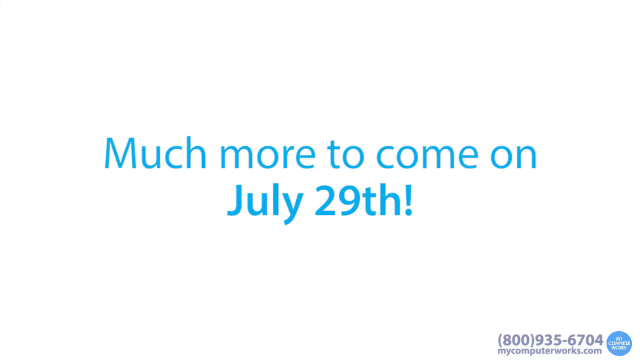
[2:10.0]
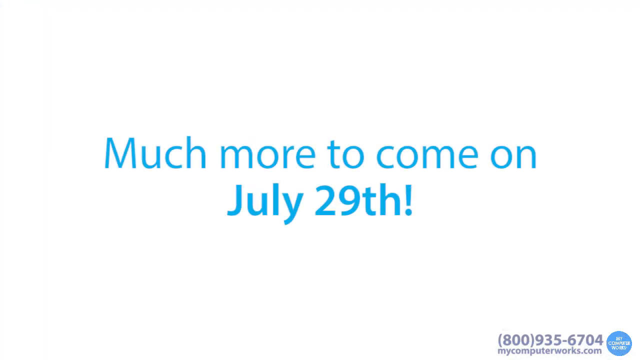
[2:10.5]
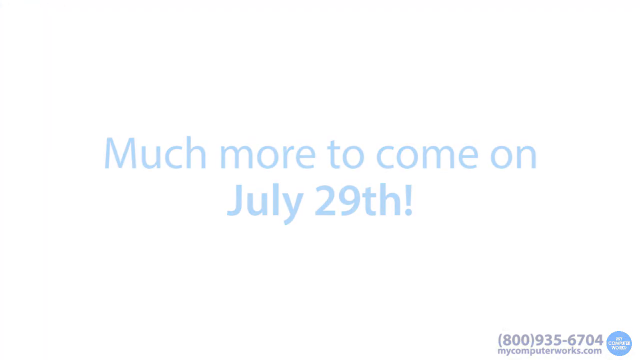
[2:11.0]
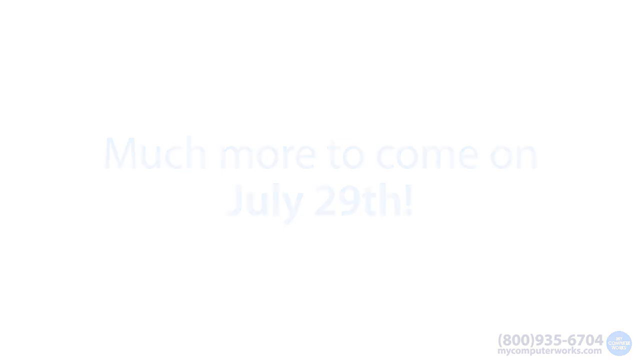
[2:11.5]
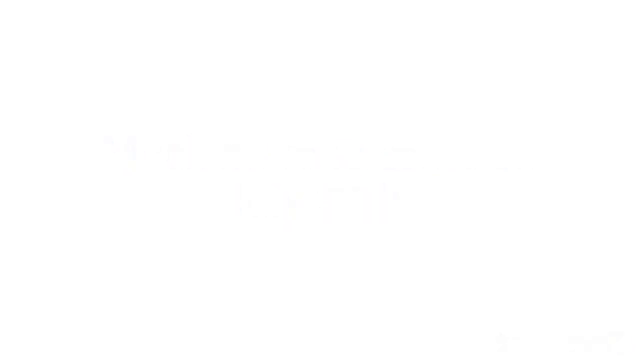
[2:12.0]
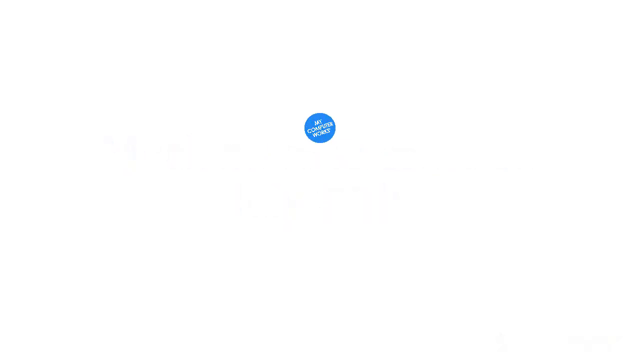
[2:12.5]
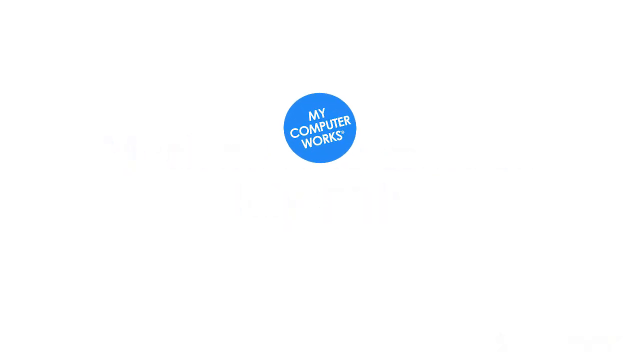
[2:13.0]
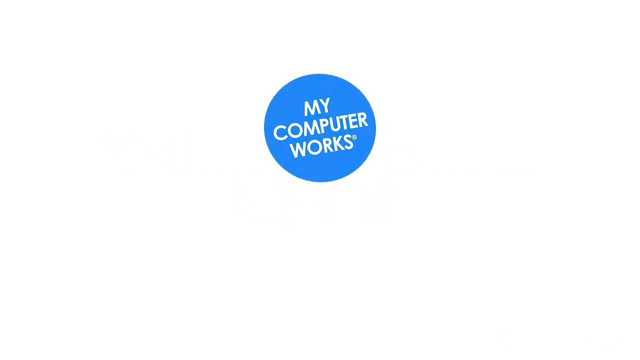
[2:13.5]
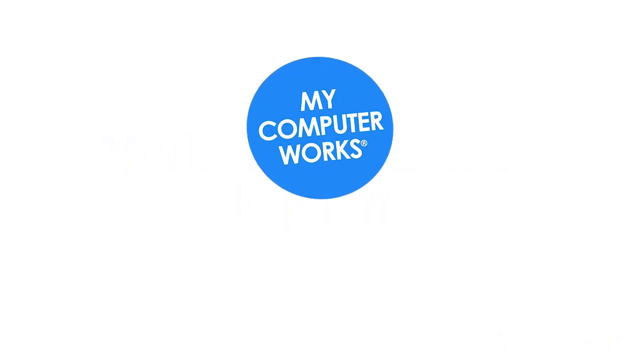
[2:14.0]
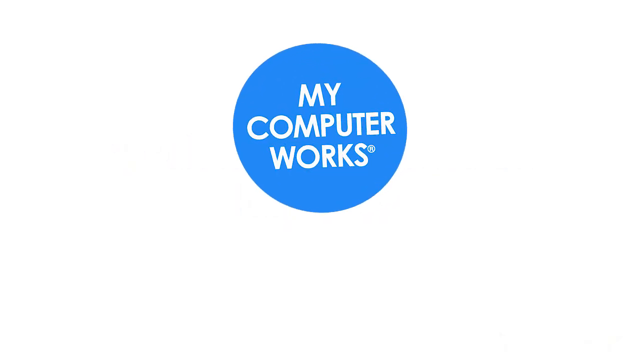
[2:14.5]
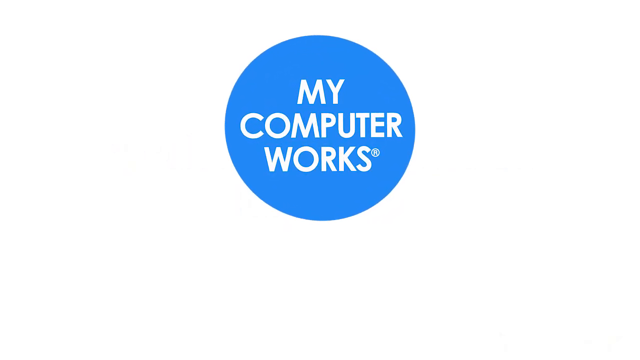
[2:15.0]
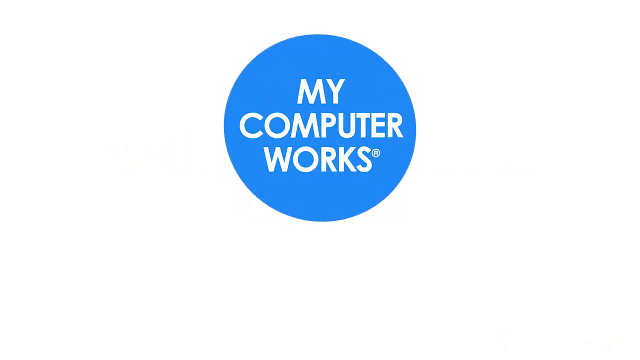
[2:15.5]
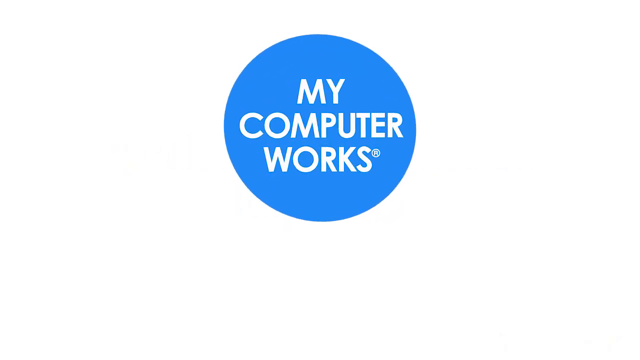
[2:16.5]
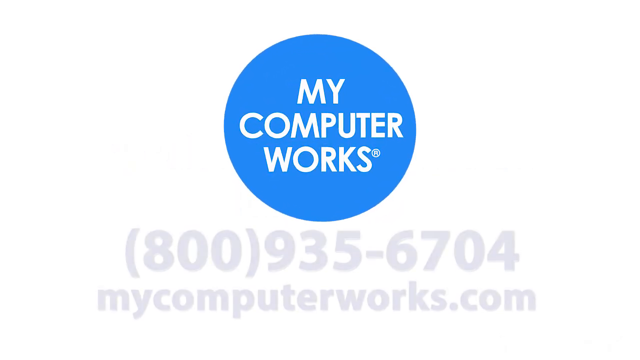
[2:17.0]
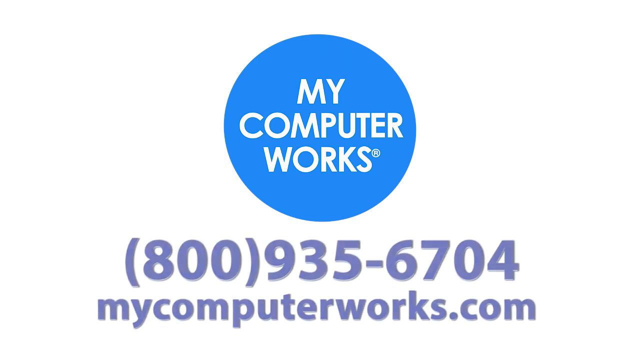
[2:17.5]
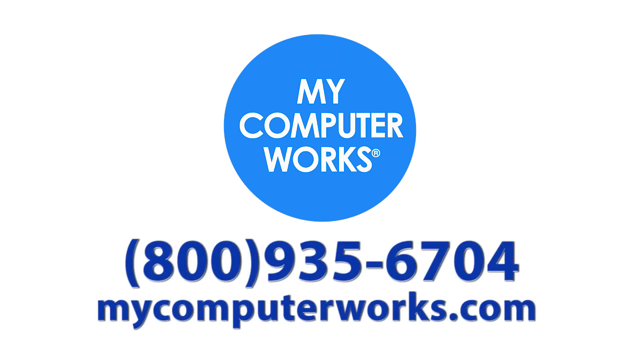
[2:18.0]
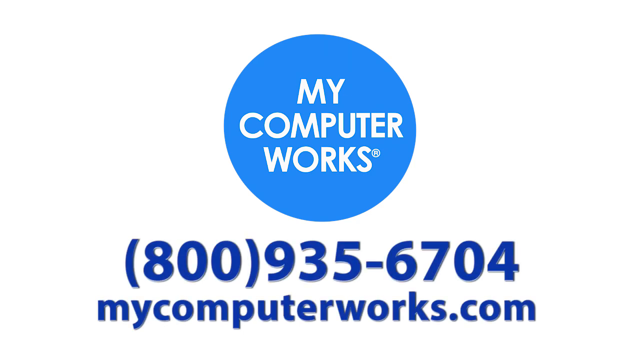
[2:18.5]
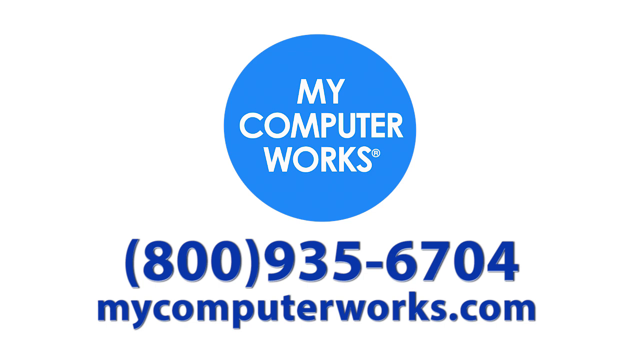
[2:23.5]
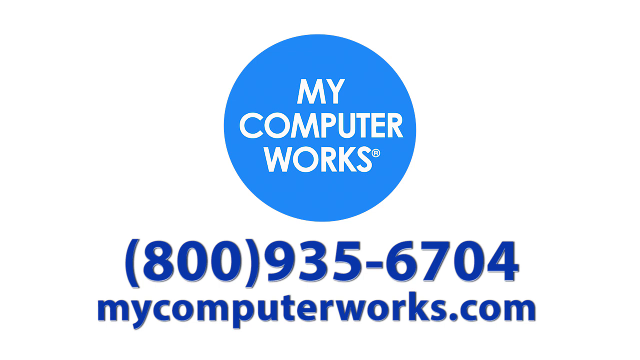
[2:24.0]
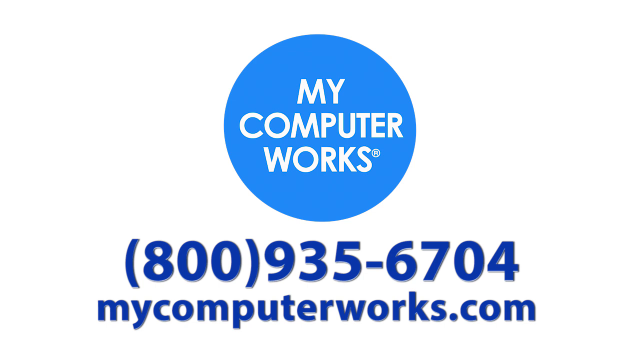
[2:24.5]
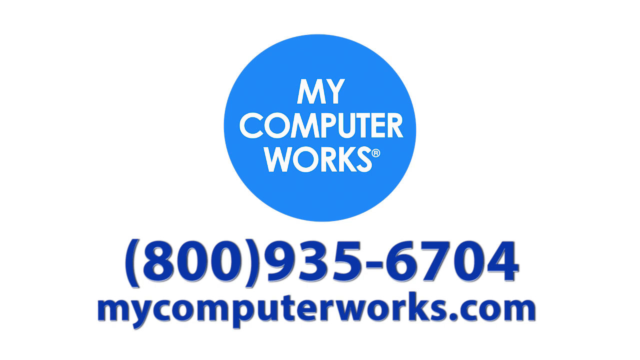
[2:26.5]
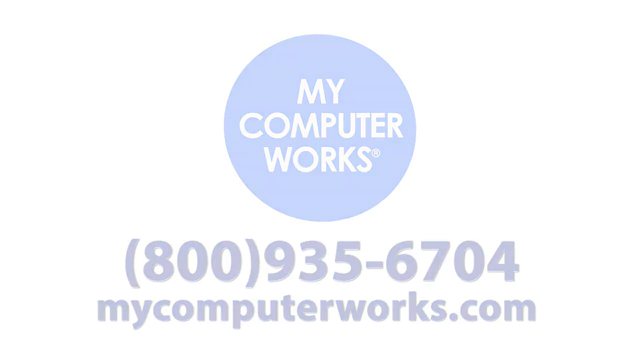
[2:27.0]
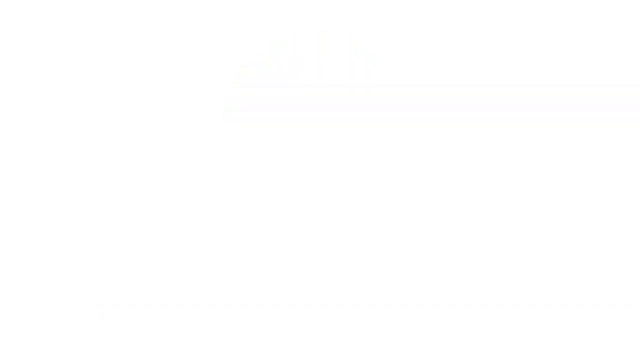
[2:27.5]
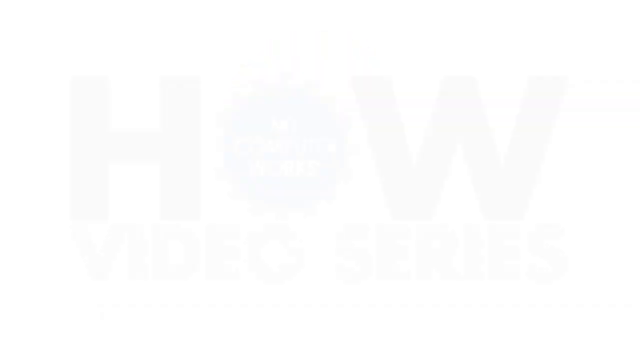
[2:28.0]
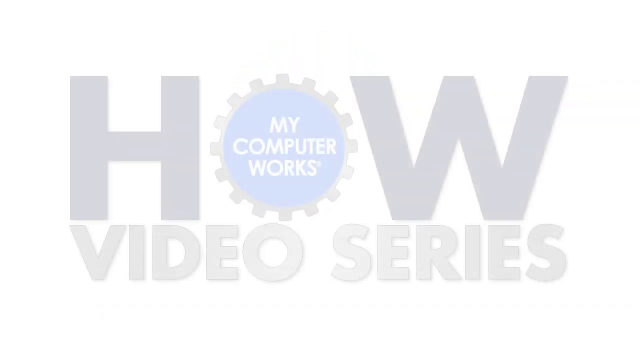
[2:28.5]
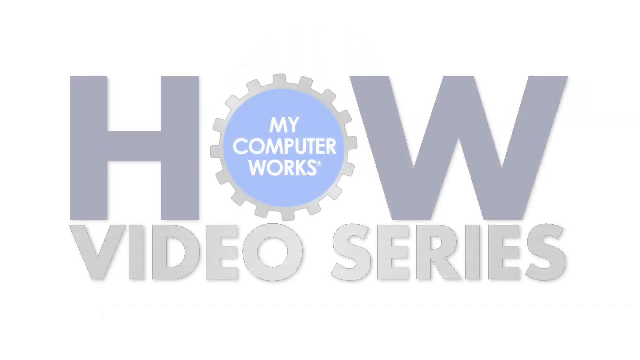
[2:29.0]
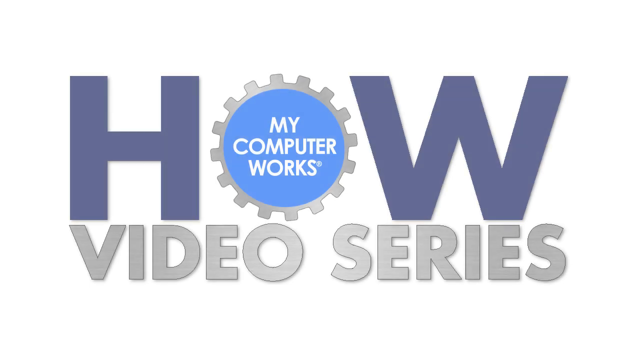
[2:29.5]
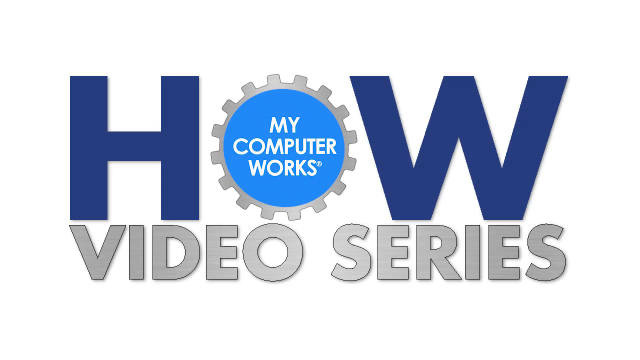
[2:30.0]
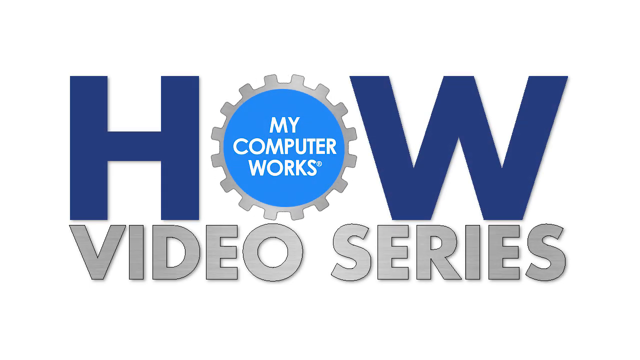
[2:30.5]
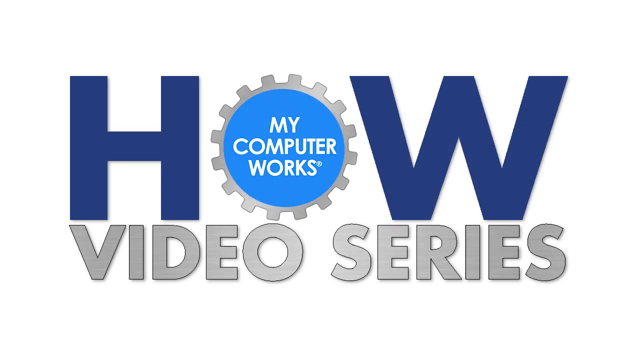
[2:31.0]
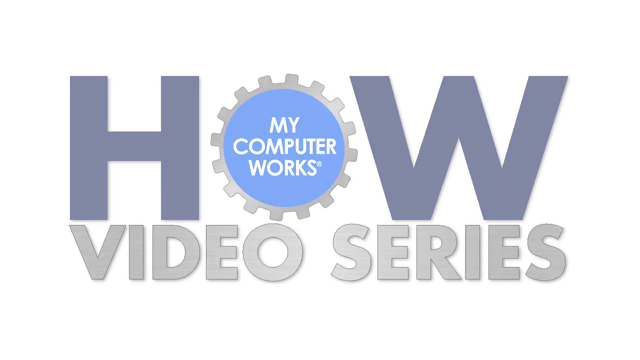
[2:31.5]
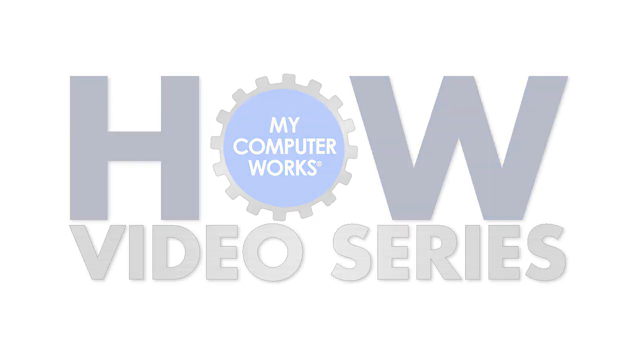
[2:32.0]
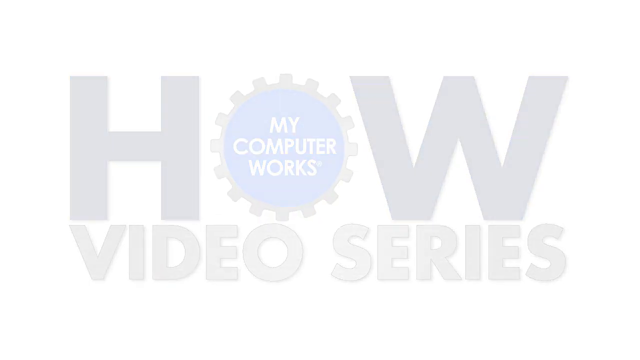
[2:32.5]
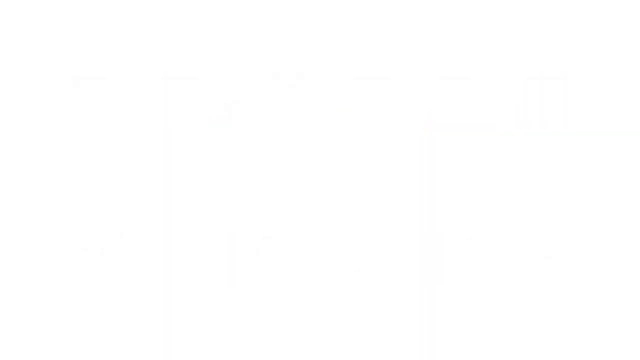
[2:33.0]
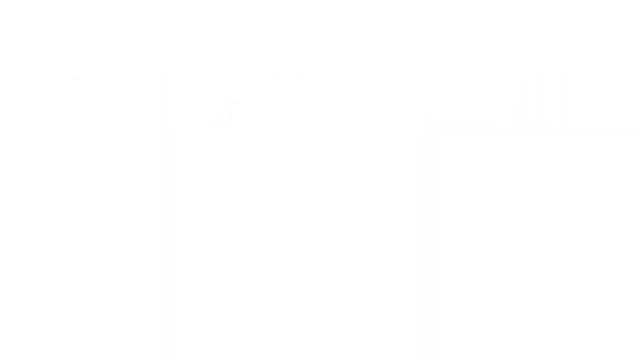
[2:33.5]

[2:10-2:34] A white screen shades down to black at the bottom with a gradation. Blue text in the middle of the screen says "Much more to come on July 29th". The blue text fades out, and from the centre of the screen grows a blue circle with "My Computer Works" in white at its centre. It halts at the top middle of the screen, and below it a blue telephone number, (800) 935-6704, fades in and drops down, with "MyComputerWorks.com" below that. The screen holds for several seconds before the circle and the text underneath fade away to a white screen. The How Video Series graphic from the very start then slowly fades in. The O in HOW is a cog turning clockwise, with a blue centre bearing "My Computer Works" in white. The H and the W are dark blue, and "Video Series" has a metallic font effect. The image slowly fades to white.